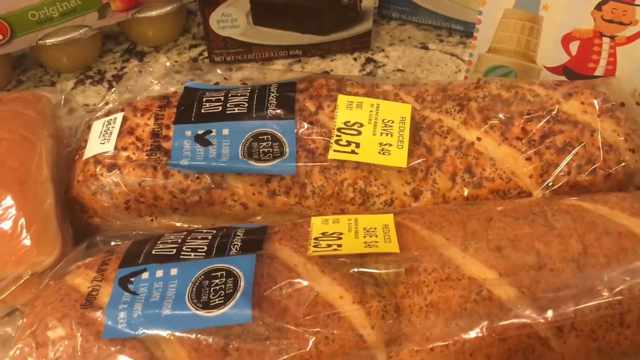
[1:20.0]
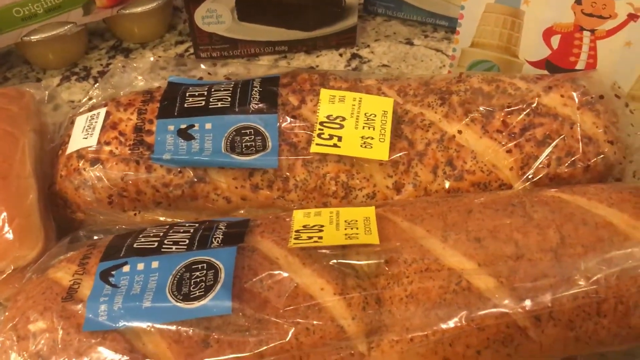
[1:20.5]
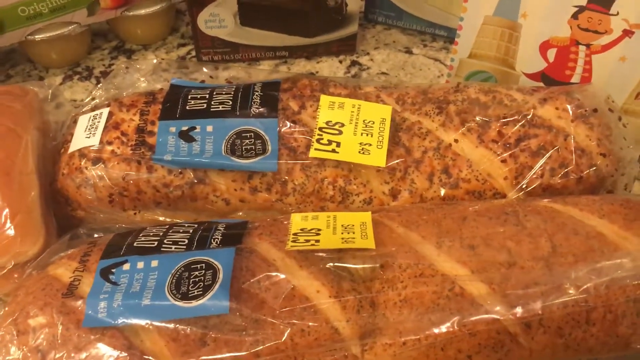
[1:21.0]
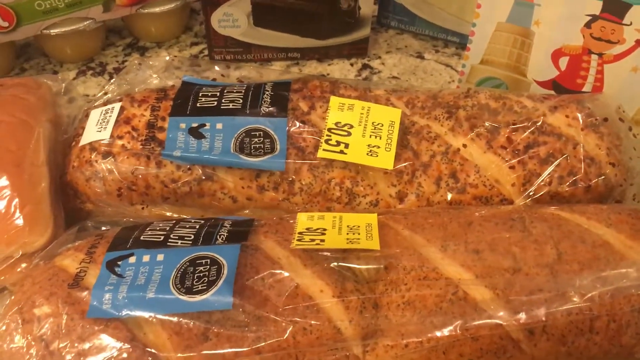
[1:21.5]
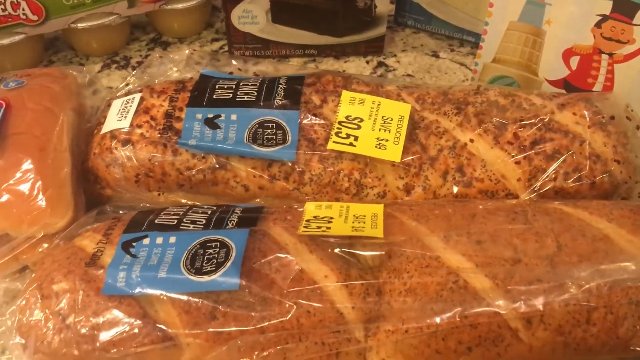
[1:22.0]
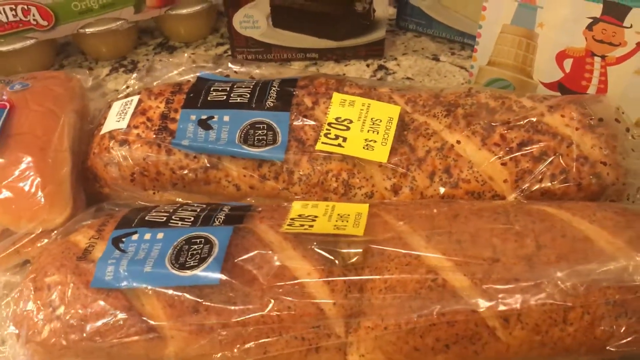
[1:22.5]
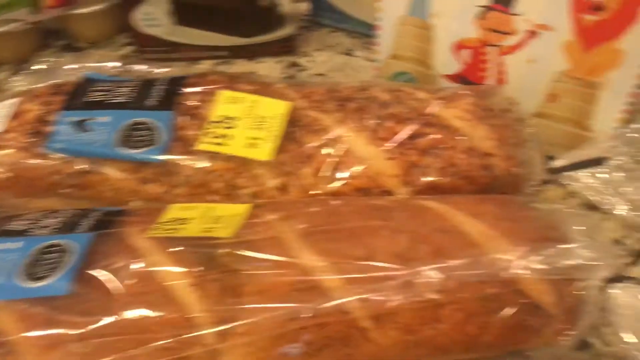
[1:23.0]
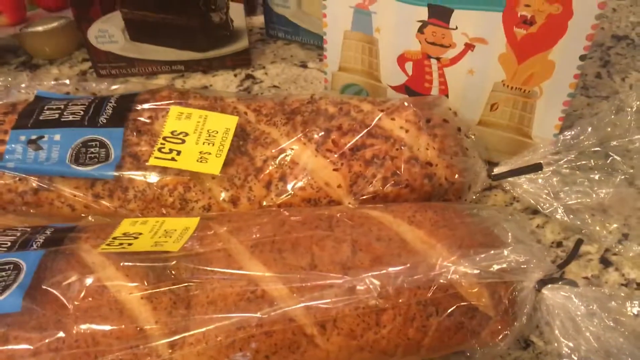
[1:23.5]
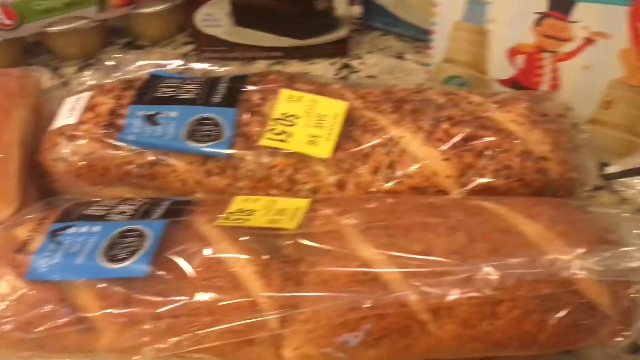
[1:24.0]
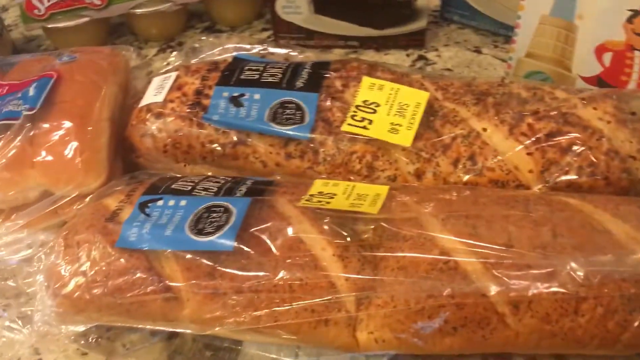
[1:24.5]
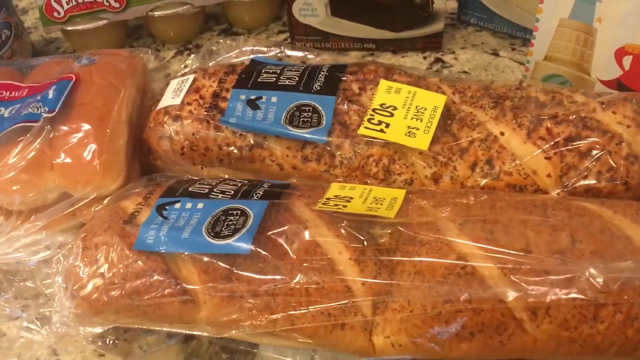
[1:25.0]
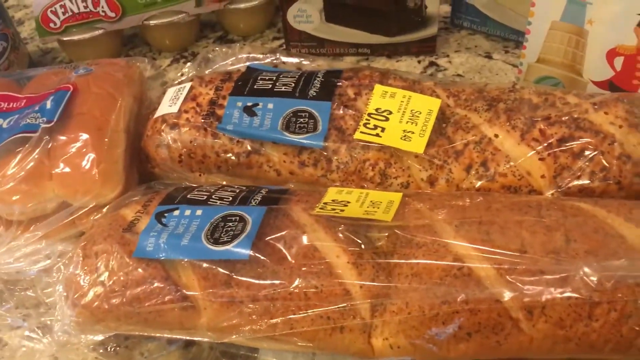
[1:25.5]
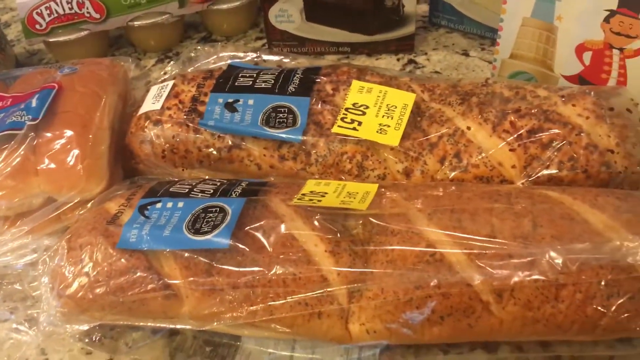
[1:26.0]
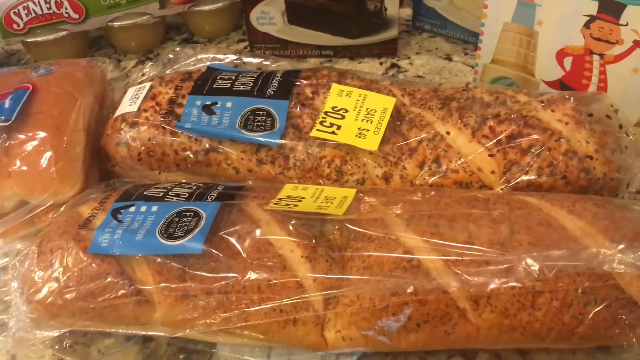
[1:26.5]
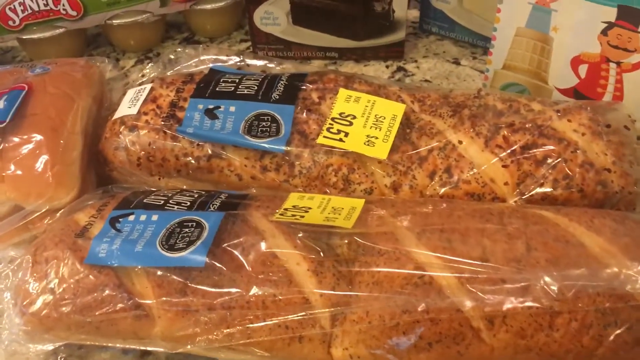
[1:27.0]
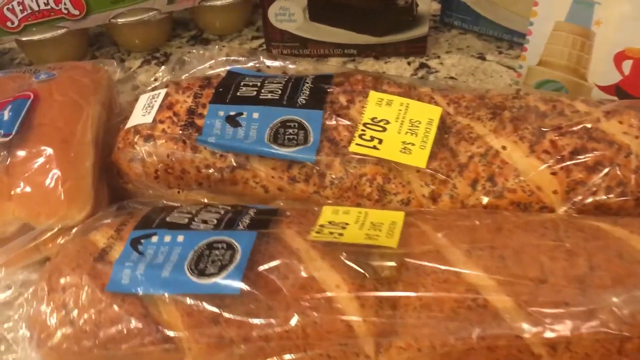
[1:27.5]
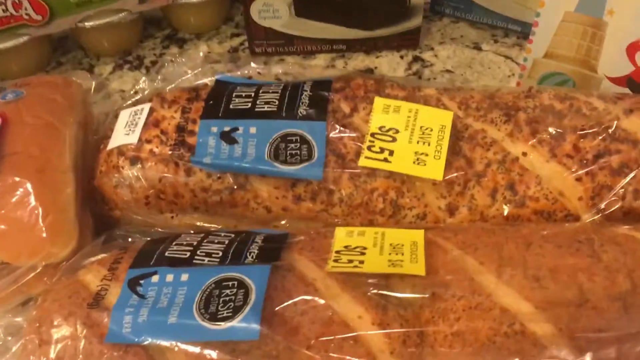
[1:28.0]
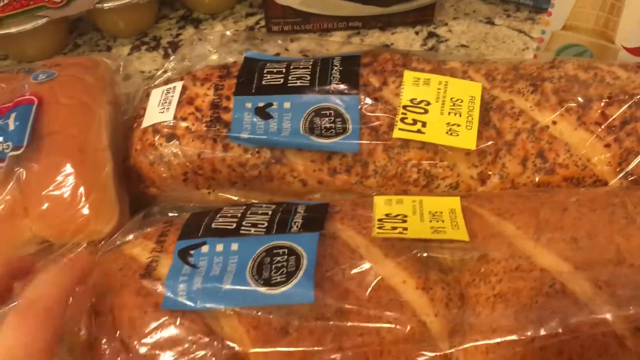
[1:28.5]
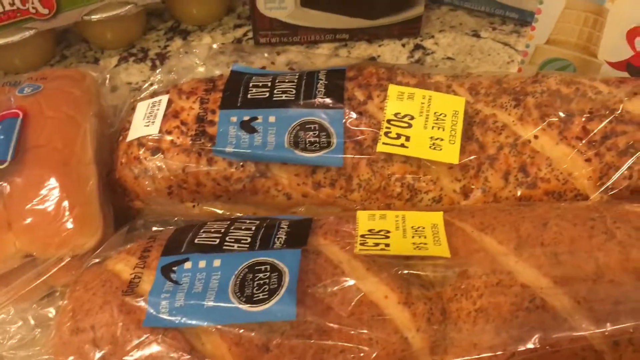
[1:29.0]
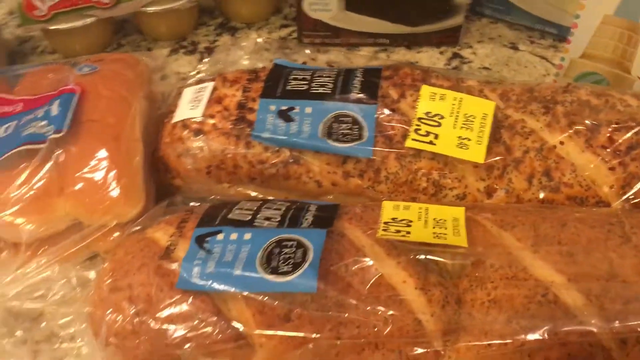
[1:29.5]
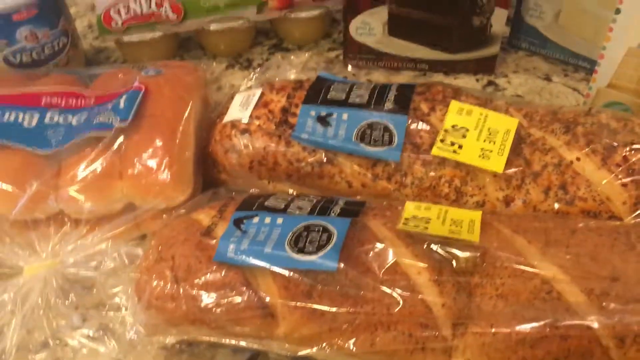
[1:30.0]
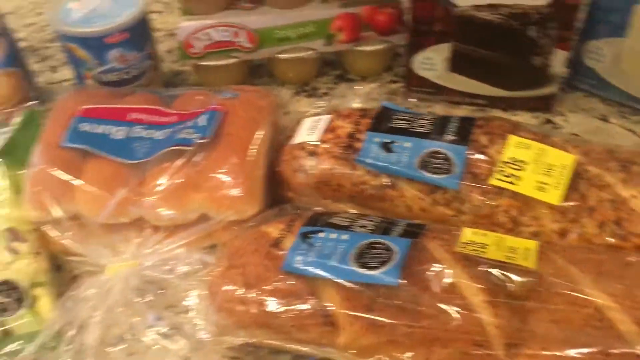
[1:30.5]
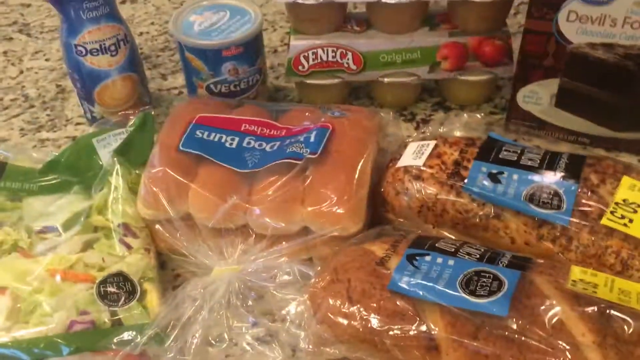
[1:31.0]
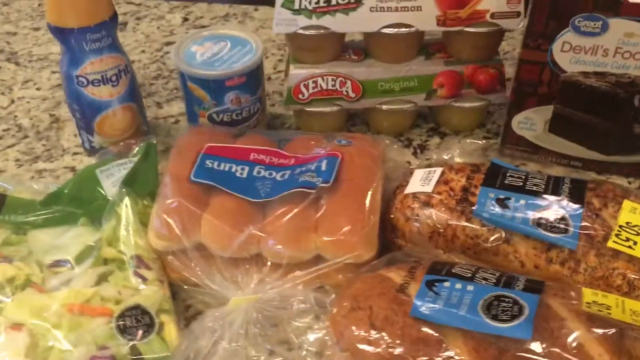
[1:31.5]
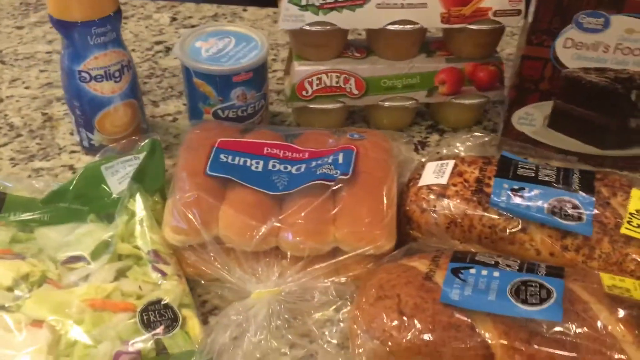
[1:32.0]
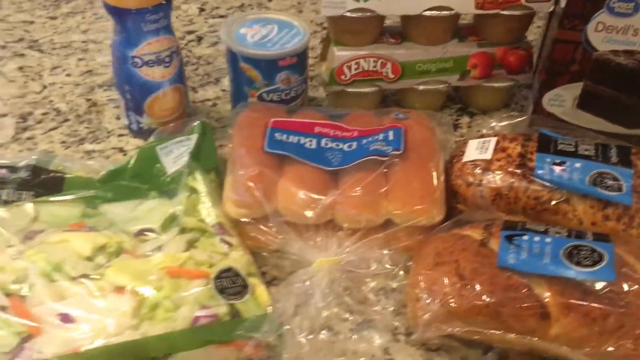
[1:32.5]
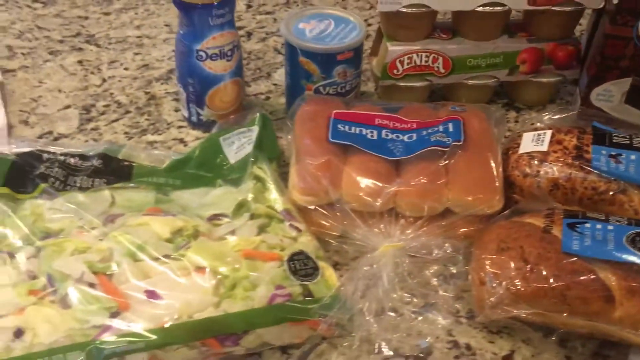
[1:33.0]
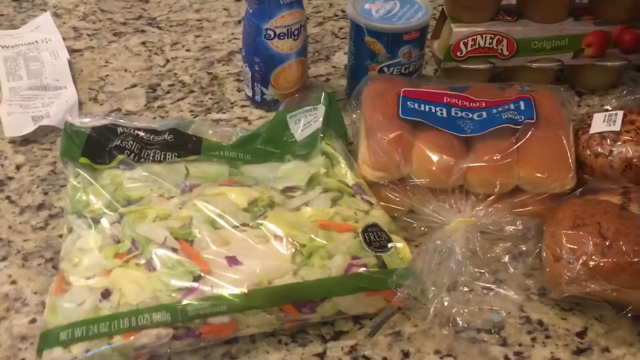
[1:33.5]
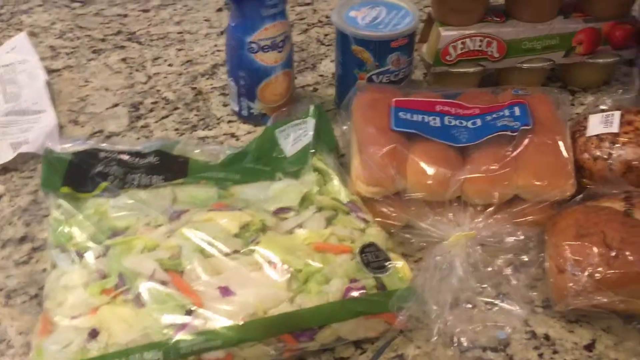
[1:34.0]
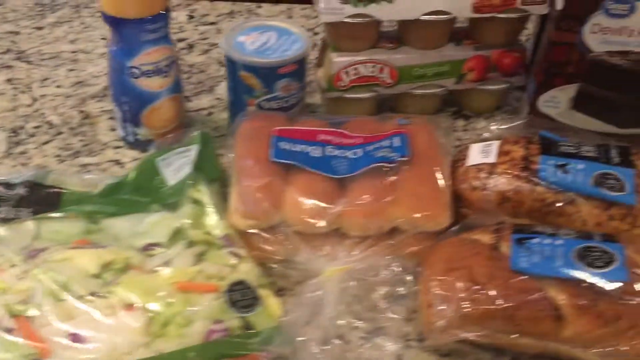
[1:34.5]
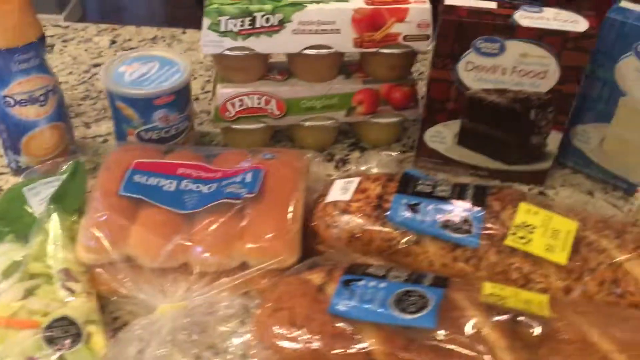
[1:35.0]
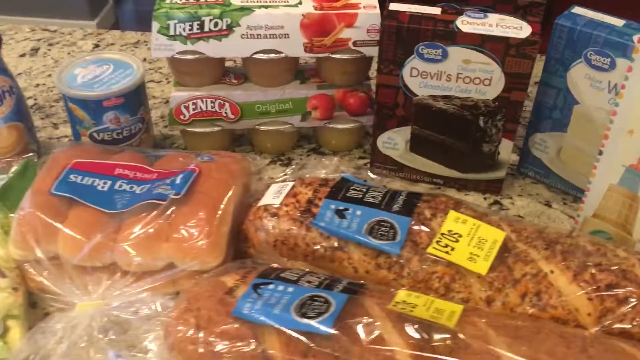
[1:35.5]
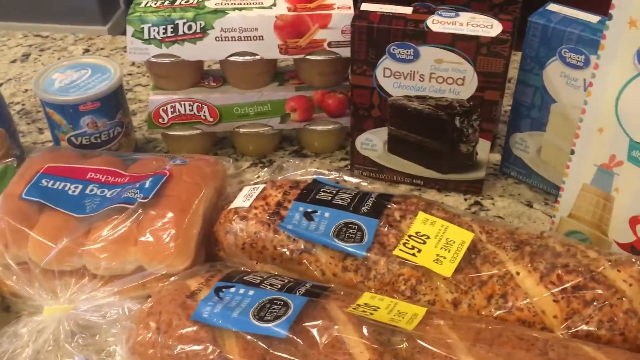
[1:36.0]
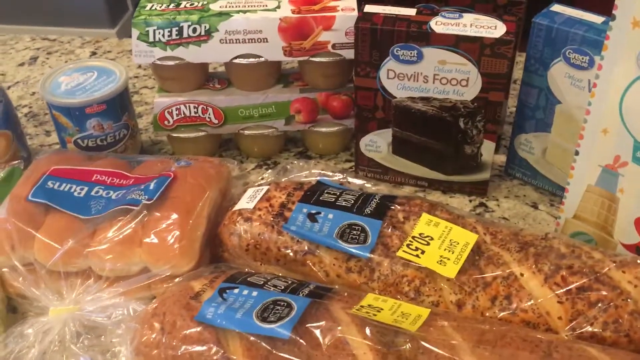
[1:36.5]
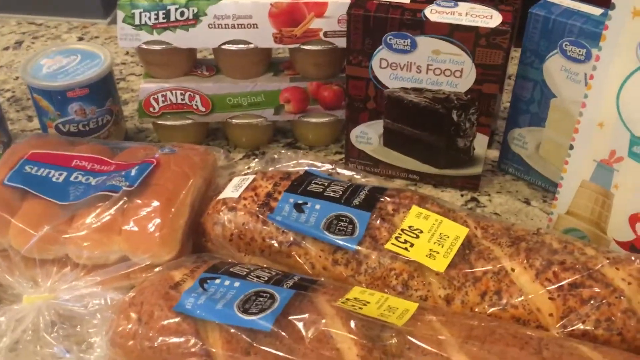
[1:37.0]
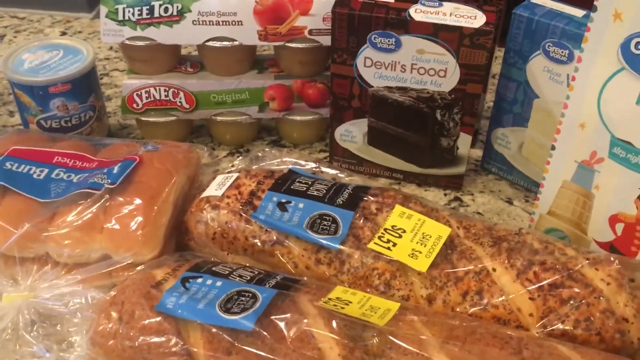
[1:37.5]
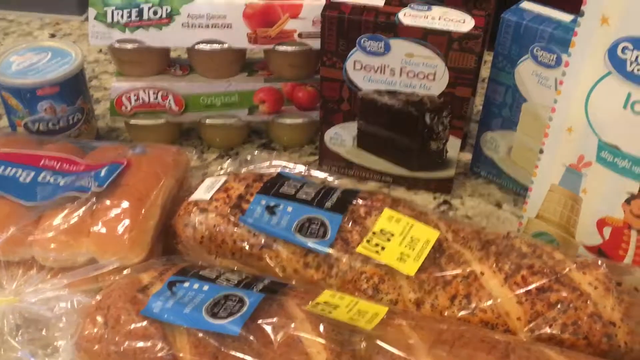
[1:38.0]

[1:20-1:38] What seems to be a grocery haul from Walmart is placed on top of a marble countertop. Two loaves of bread are in a transparent plastic bag, with yellow tags showing the price of the bread: 51 cents. The eight-pack of hot dog buns is in transparent plastic with a white, blue and pink logo. The bag of salad is on the left-hand side, and in front of the bag is a receipt for the groceries from Walmart.